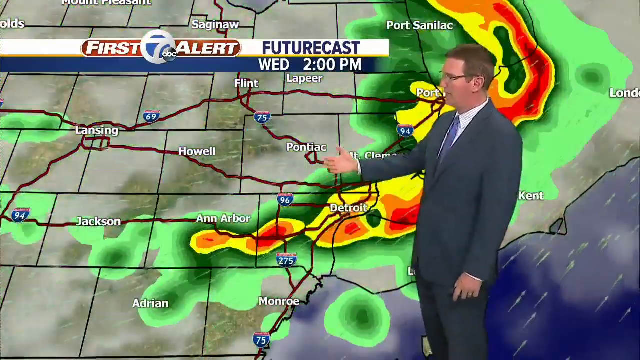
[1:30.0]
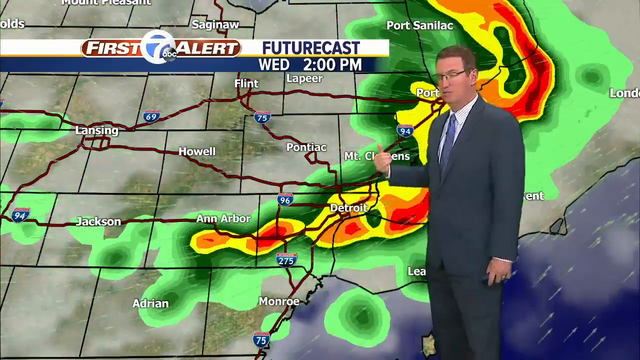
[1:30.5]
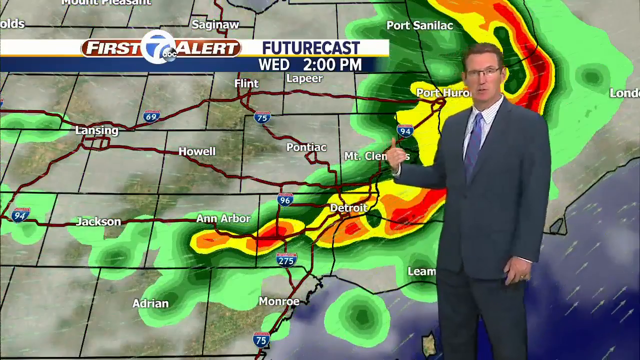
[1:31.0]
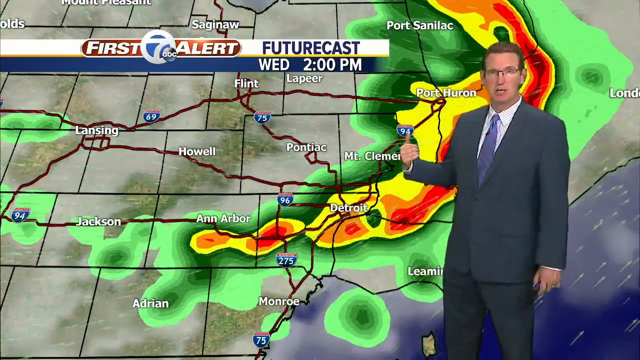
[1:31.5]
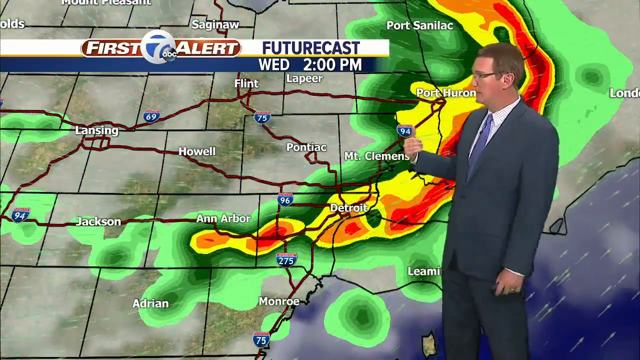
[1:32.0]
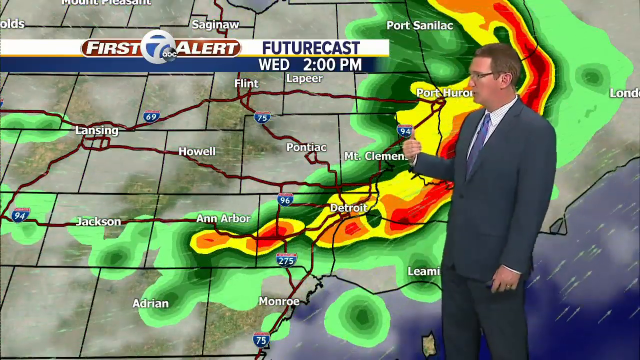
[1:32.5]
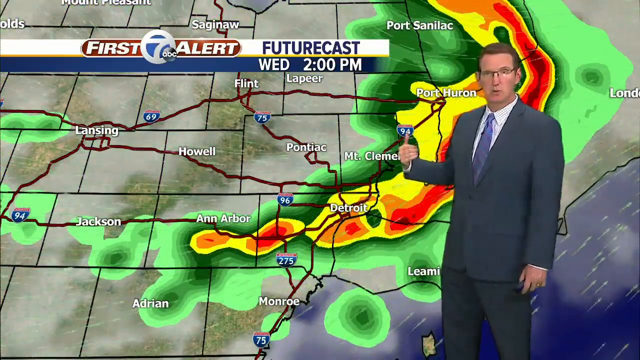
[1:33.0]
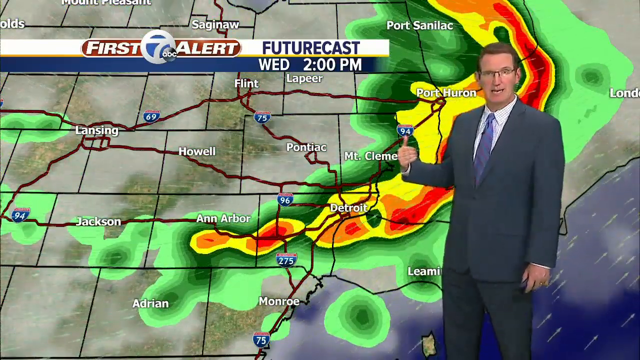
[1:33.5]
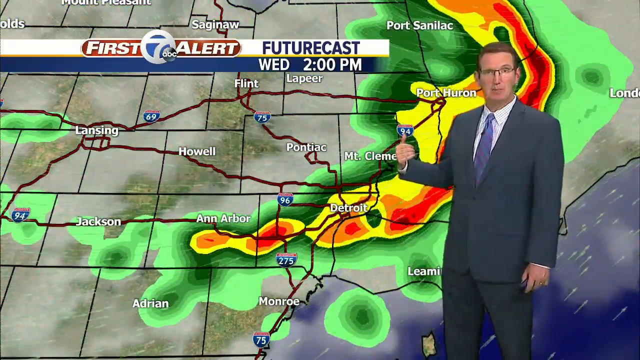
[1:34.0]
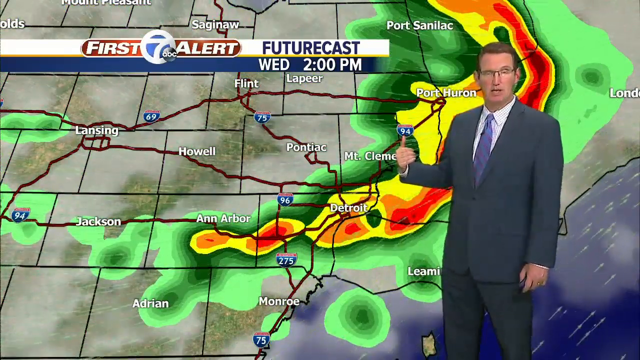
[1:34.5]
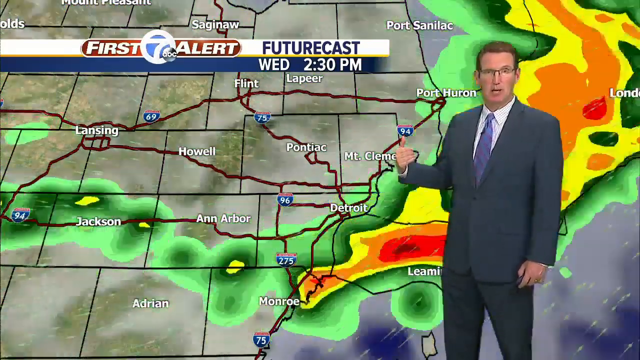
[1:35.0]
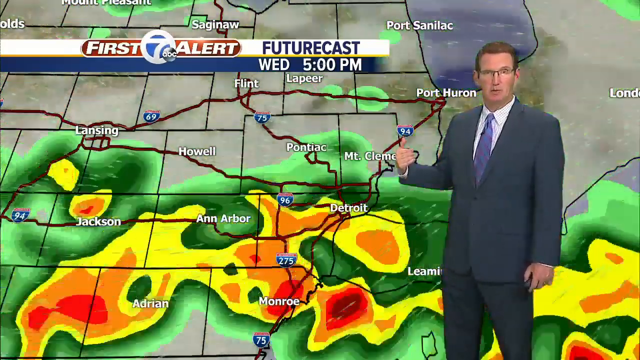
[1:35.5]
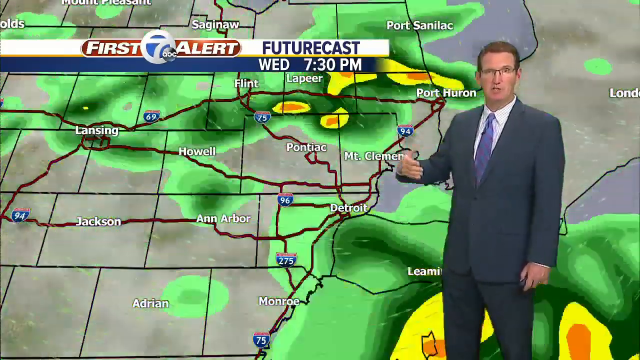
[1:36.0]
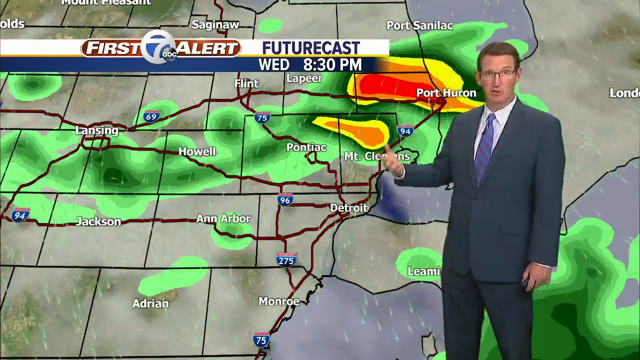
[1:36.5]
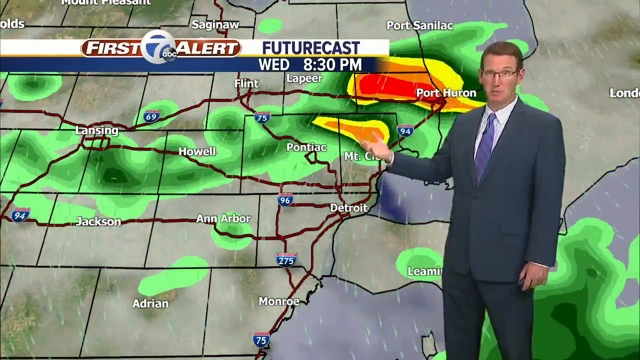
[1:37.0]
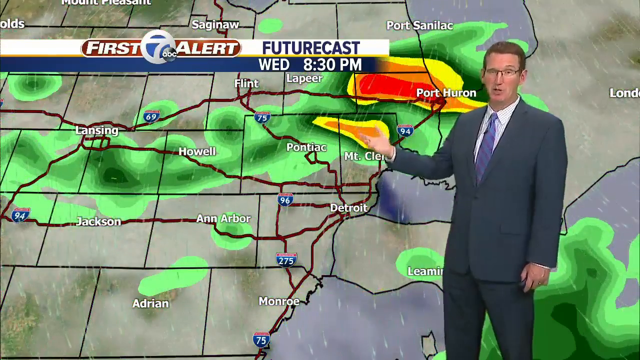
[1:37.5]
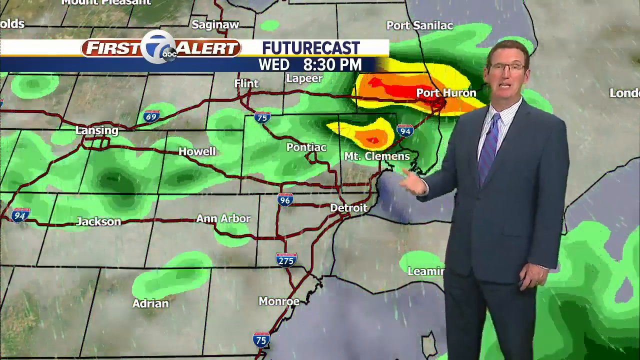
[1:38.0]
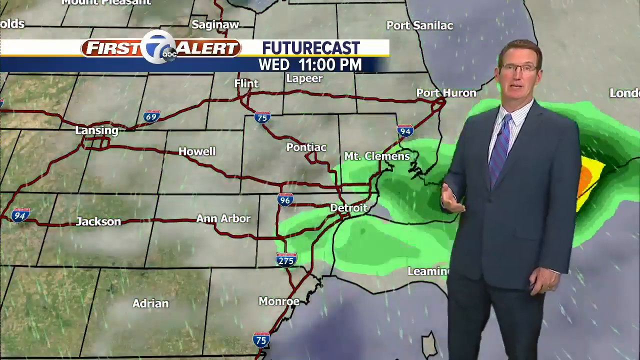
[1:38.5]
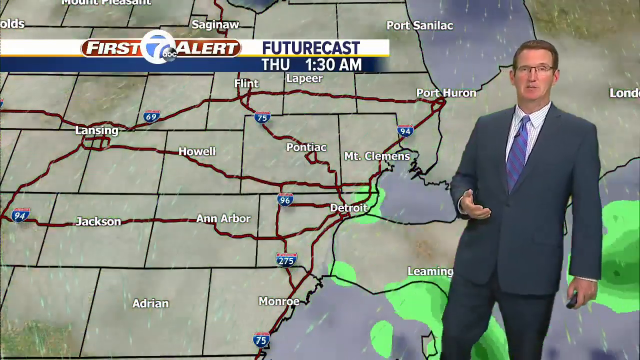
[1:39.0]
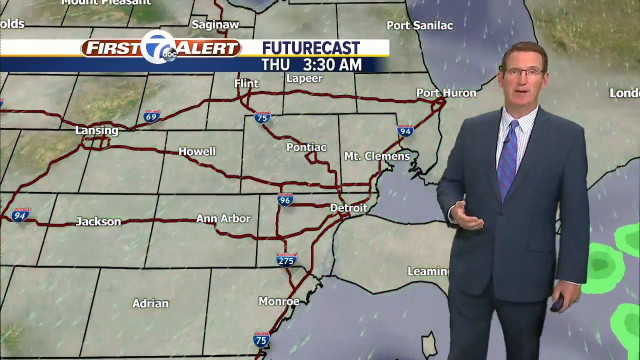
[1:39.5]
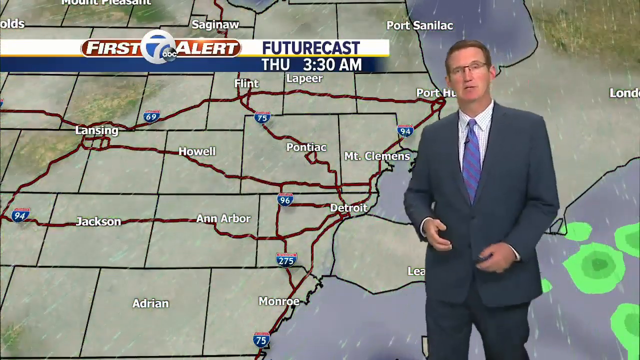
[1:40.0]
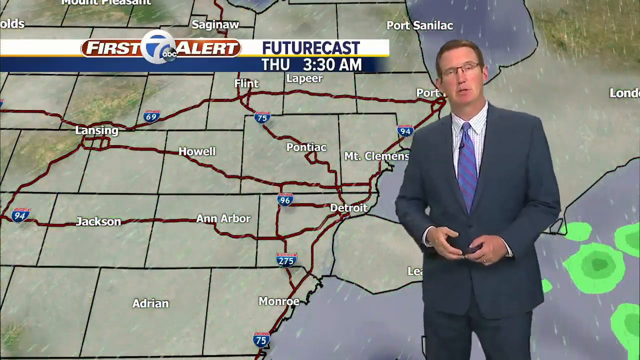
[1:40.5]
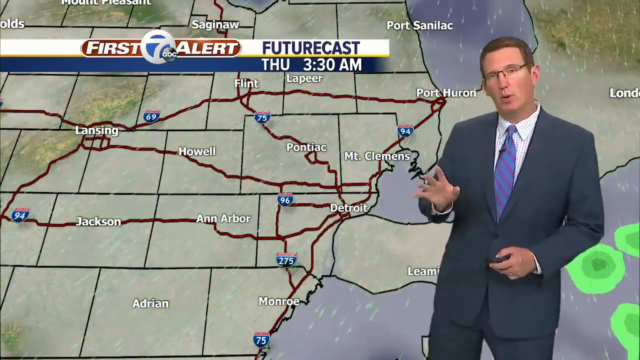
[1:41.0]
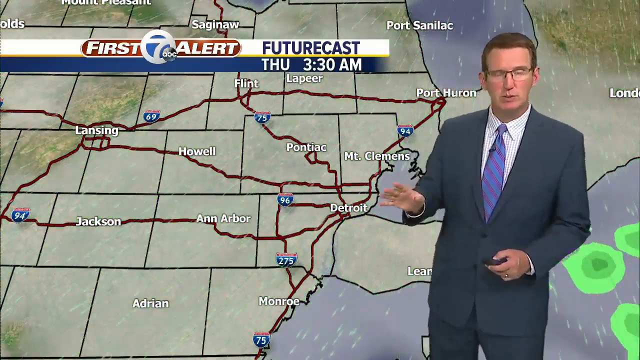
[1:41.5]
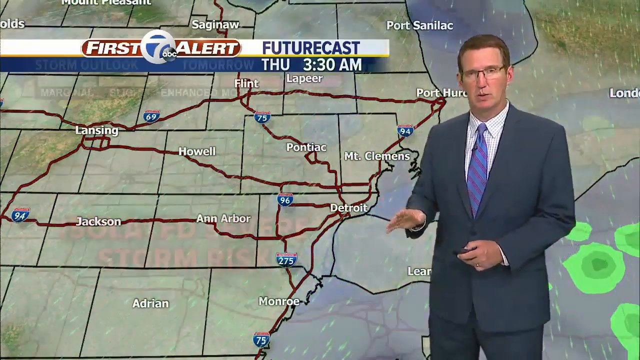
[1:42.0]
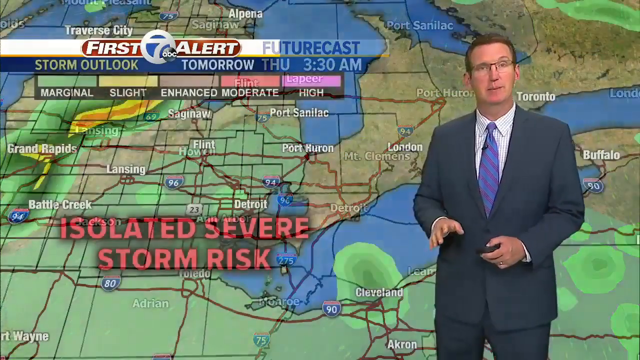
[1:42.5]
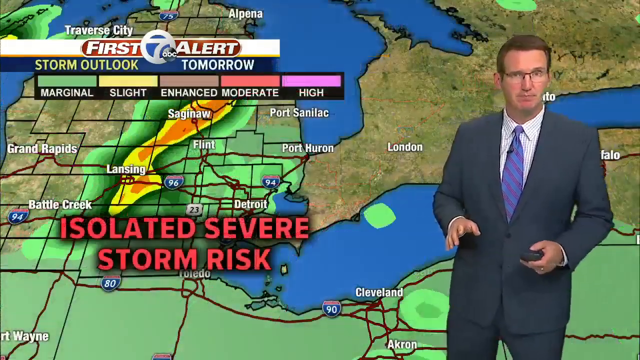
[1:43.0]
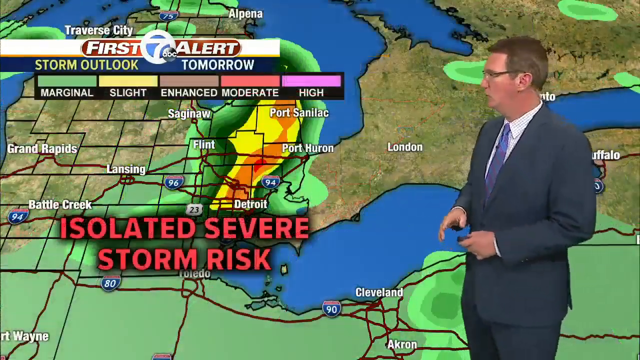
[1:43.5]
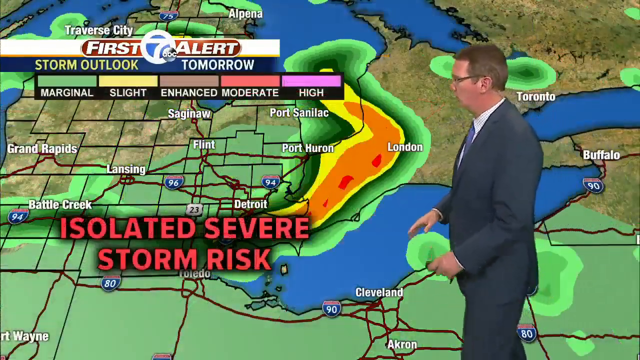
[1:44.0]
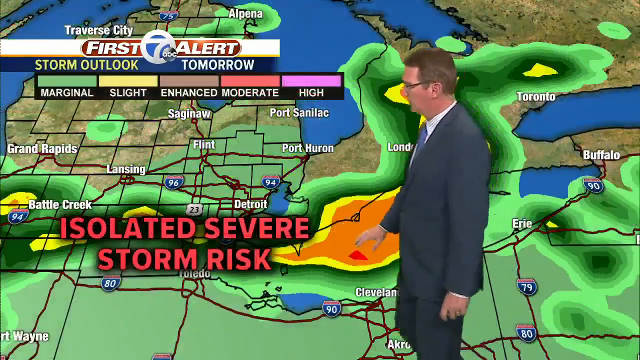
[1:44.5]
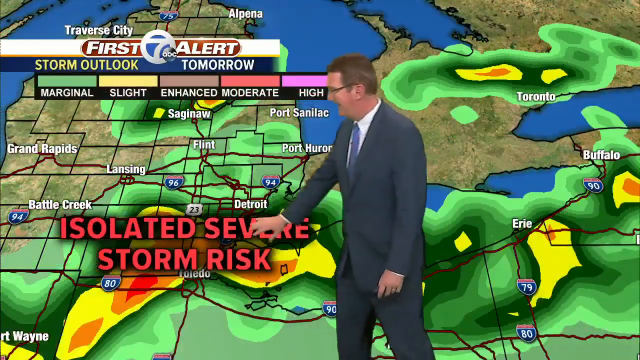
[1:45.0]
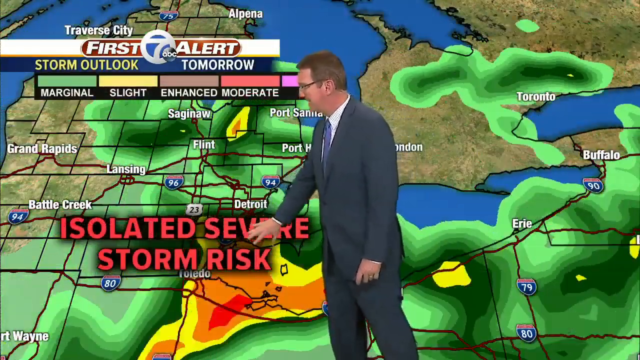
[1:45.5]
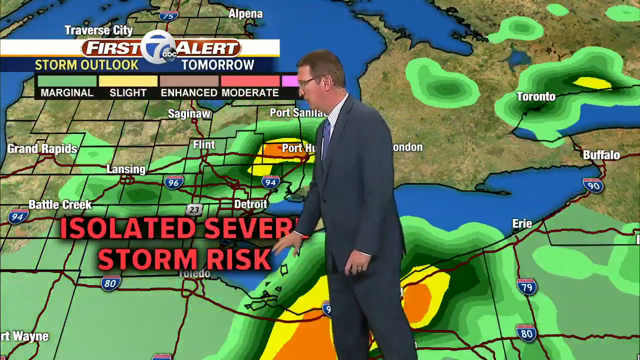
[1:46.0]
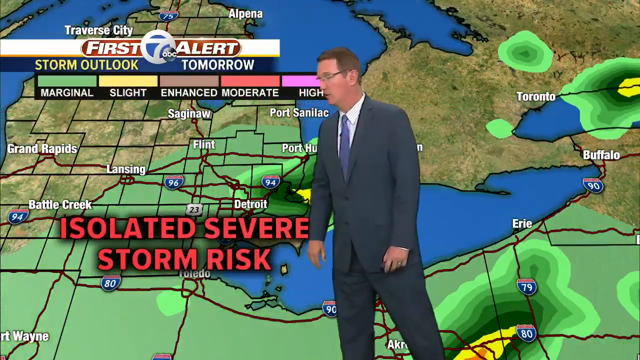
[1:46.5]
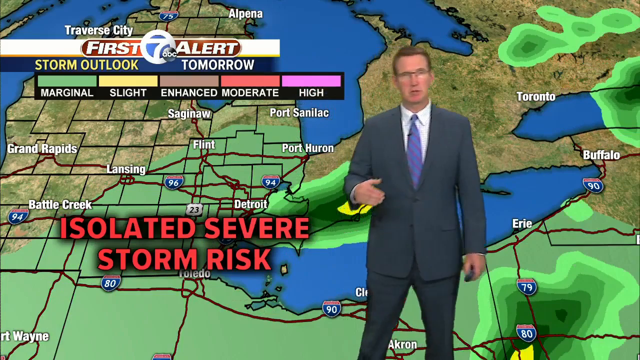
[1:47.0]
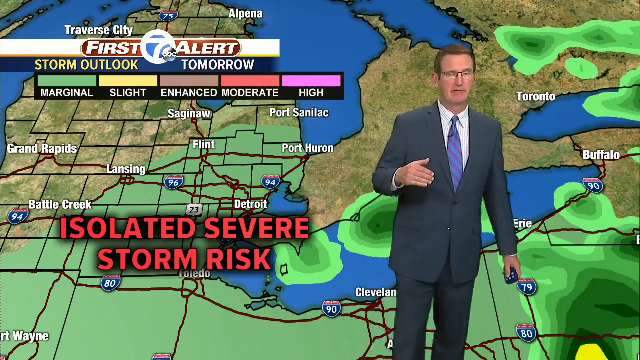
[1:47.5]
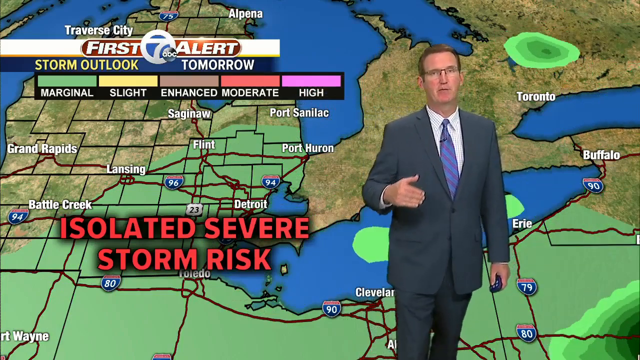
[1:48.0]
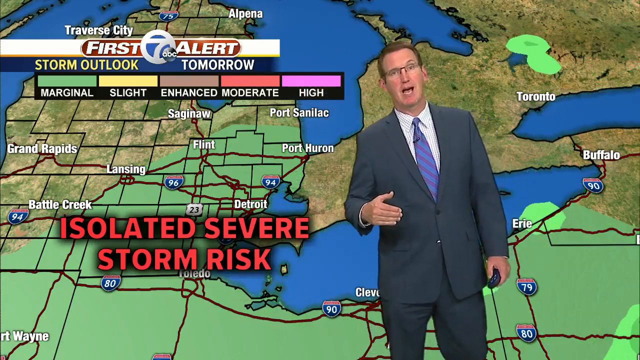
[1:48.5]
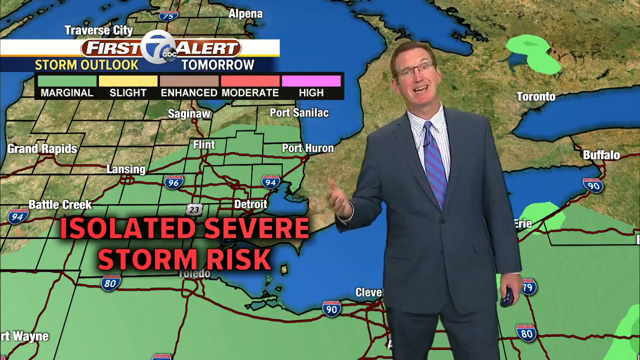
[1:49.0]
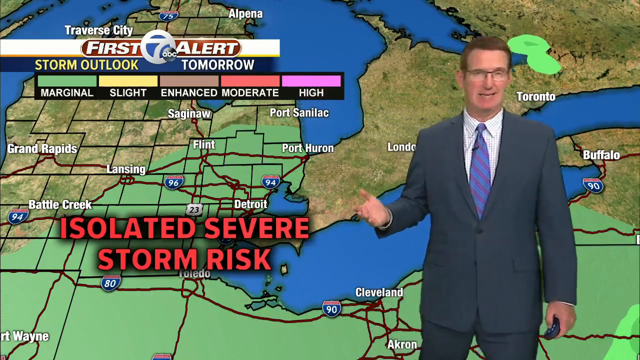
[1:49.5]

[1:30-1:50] For Wednesday at 2 p.m., the map shows it still raining, with hot conditions at Pottery Run. Moving on to Thursday at 3:30 a.m., the hot conditions move and isolated severe storm risks appear. Tomorrow's storm outlook shows the margins and the severity of the storm as the day progresses, with heavy rain and hot conditions moving along to the sea point on Thursday morning, and then moderate isolated storm risks tomorrow.